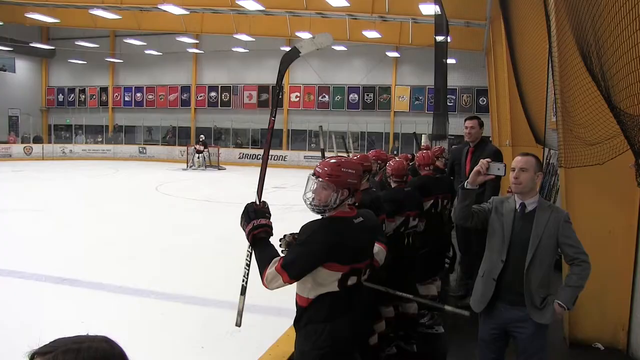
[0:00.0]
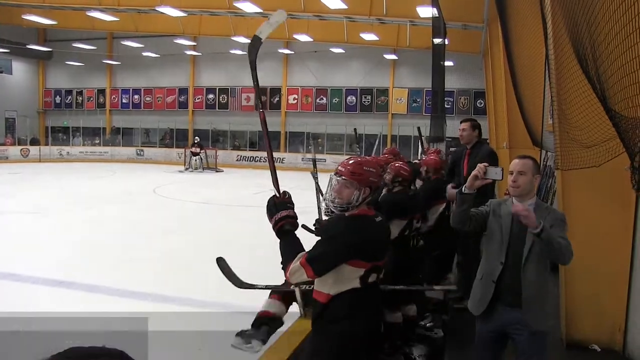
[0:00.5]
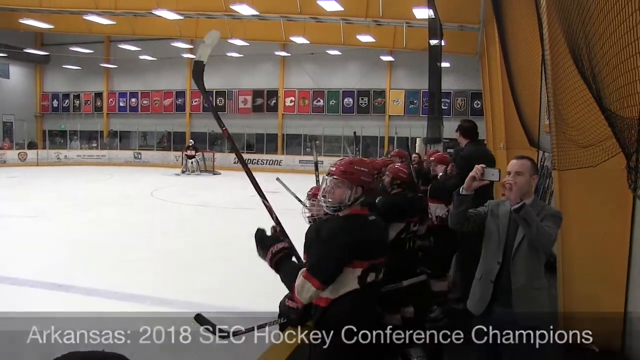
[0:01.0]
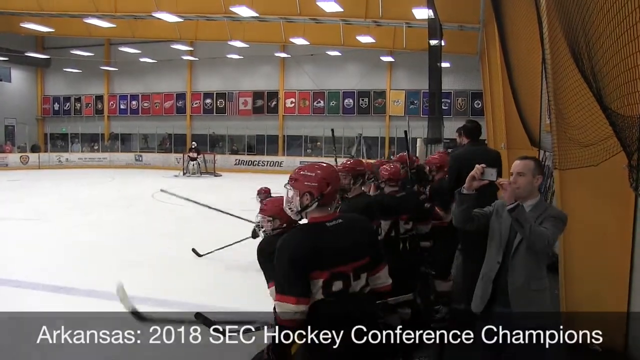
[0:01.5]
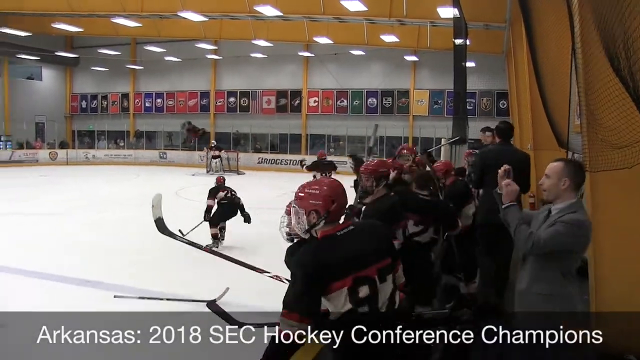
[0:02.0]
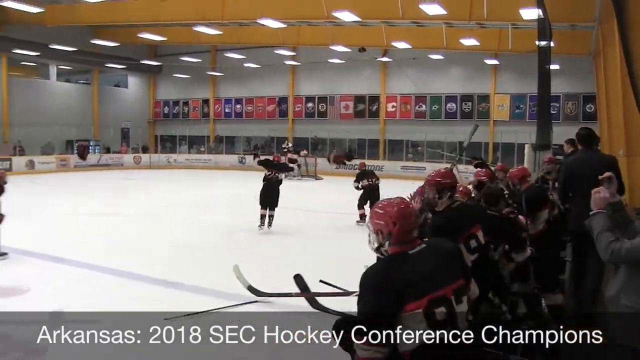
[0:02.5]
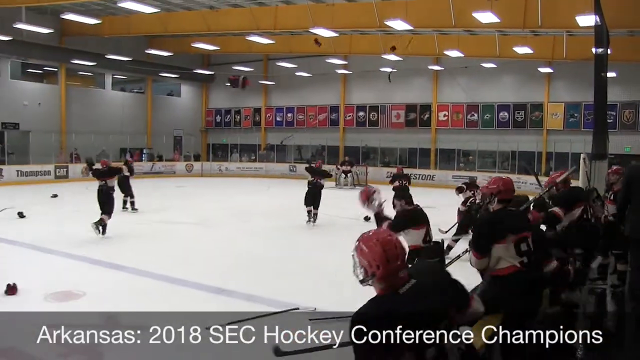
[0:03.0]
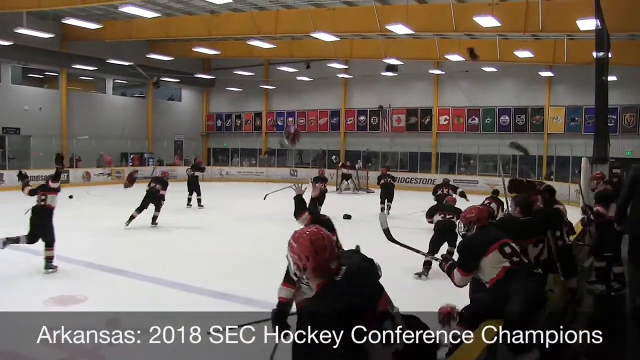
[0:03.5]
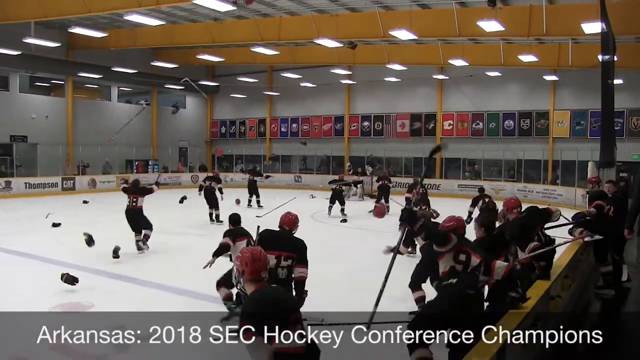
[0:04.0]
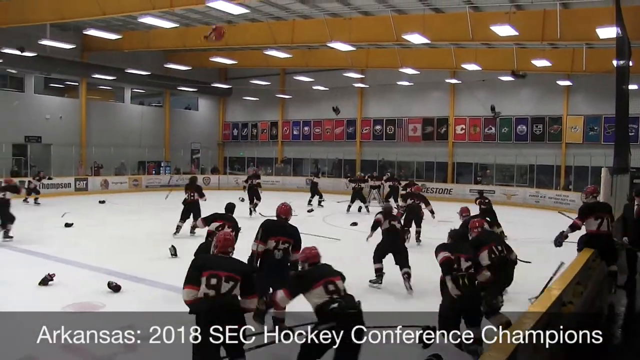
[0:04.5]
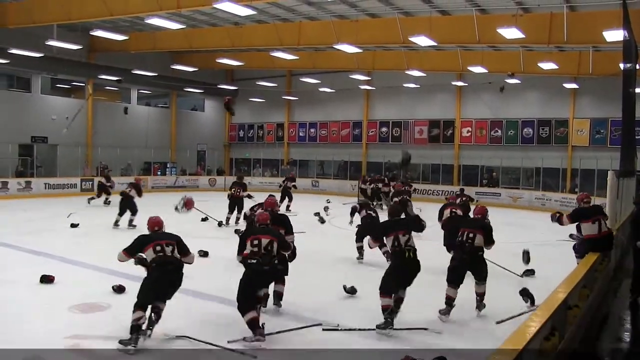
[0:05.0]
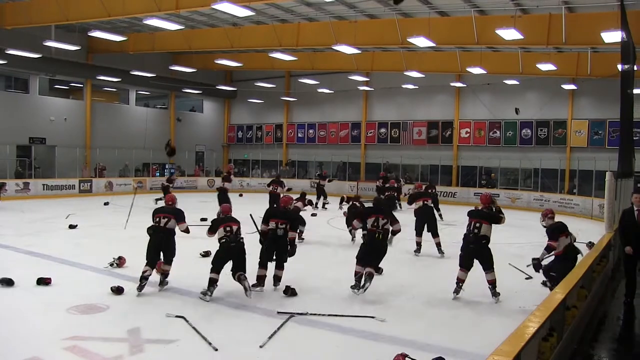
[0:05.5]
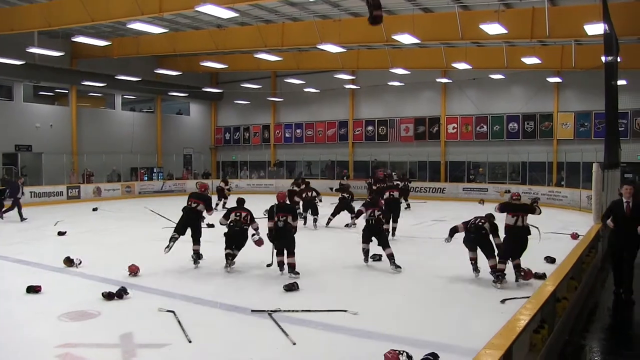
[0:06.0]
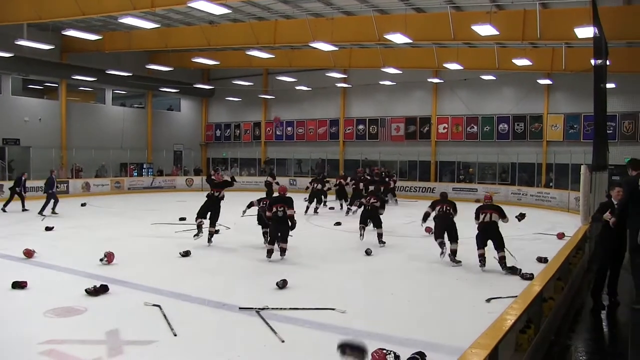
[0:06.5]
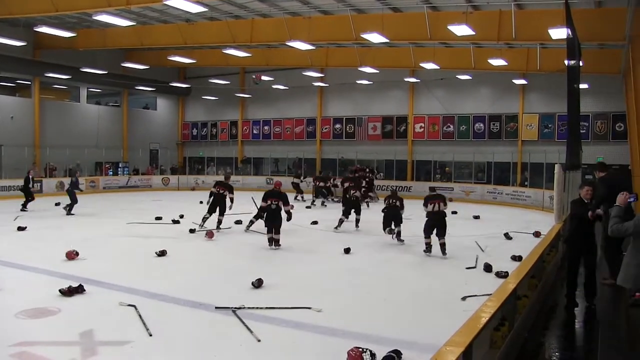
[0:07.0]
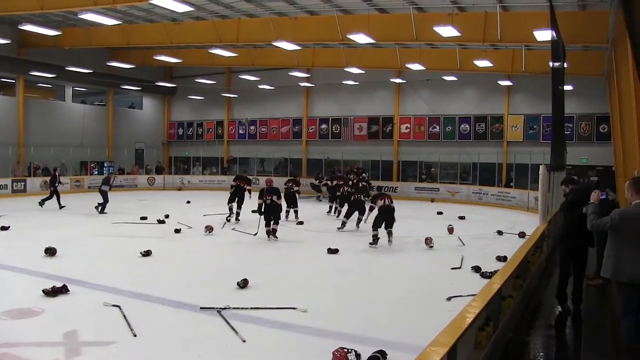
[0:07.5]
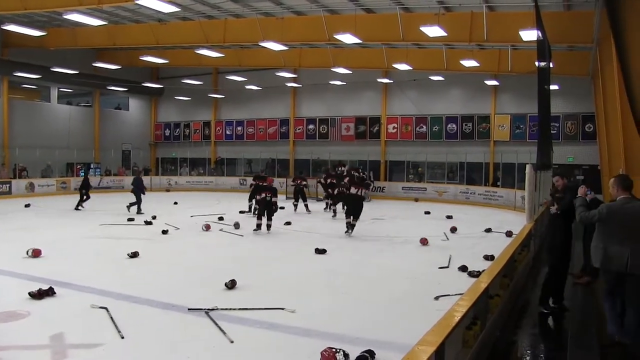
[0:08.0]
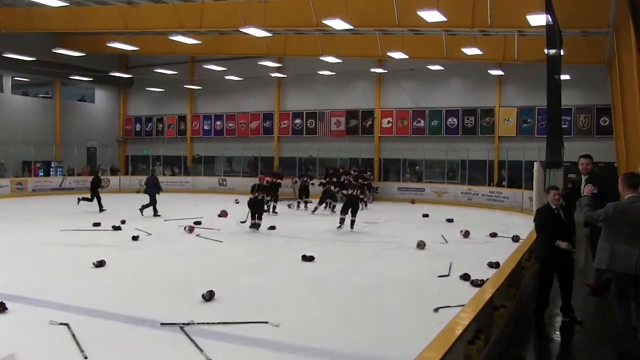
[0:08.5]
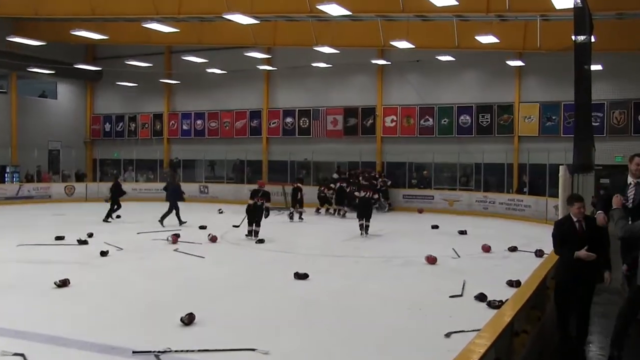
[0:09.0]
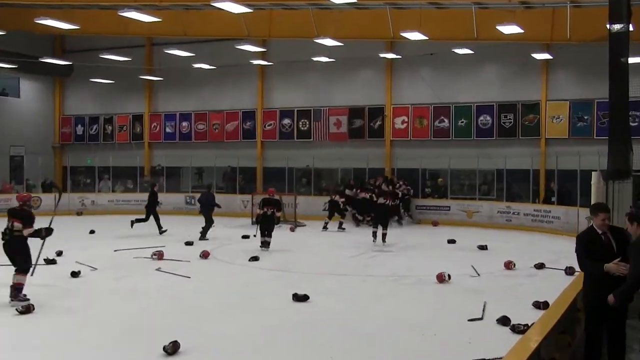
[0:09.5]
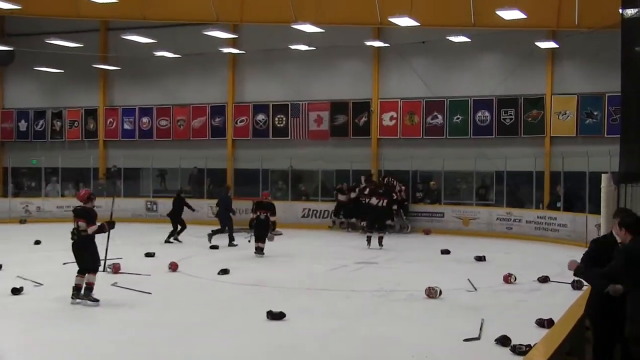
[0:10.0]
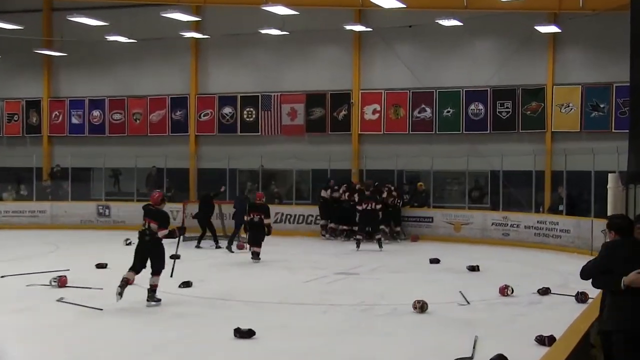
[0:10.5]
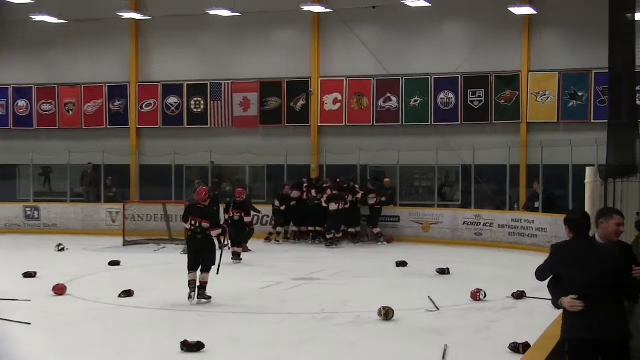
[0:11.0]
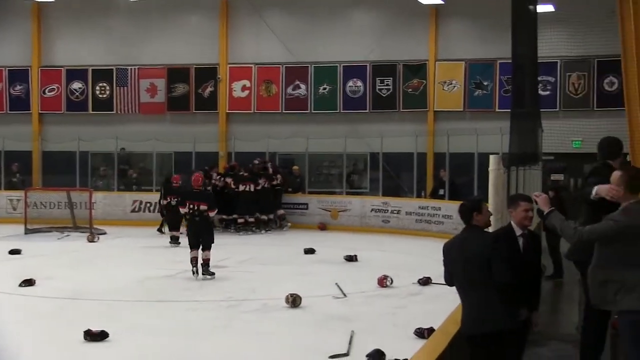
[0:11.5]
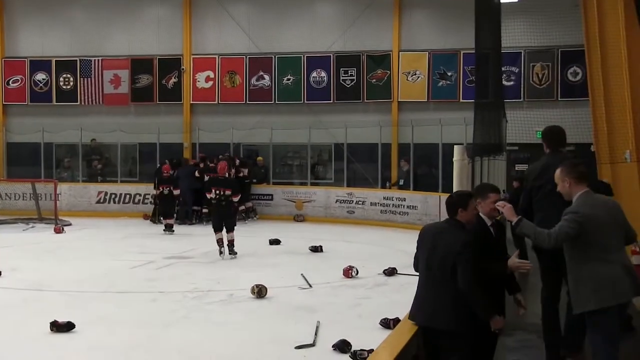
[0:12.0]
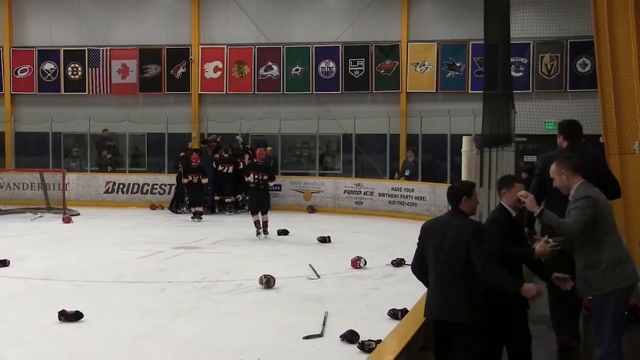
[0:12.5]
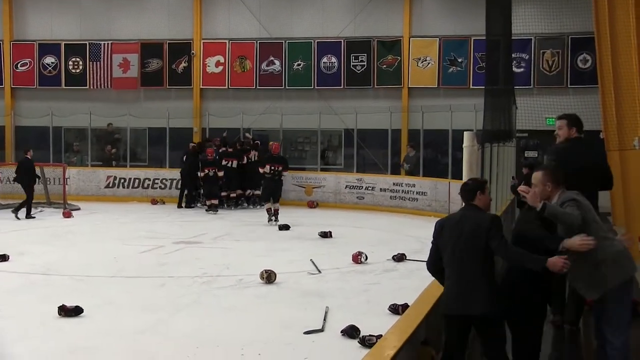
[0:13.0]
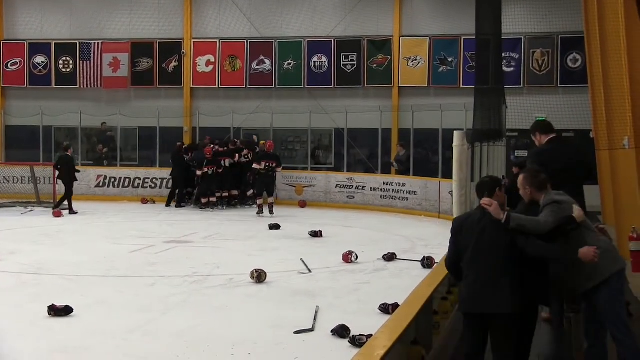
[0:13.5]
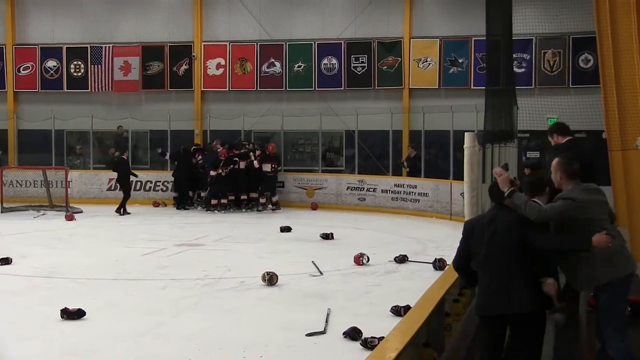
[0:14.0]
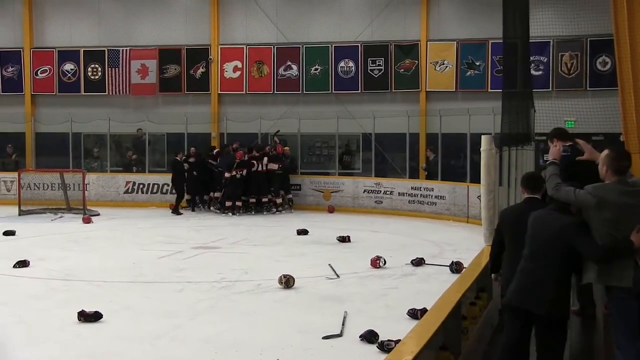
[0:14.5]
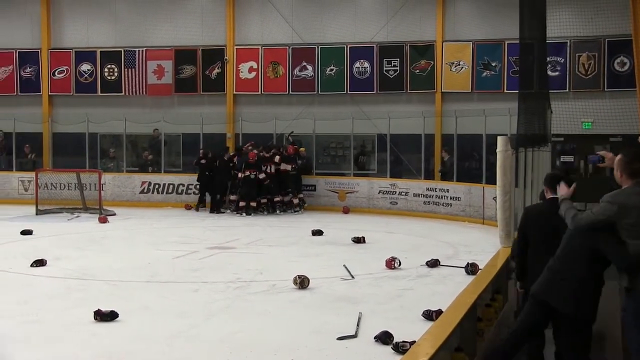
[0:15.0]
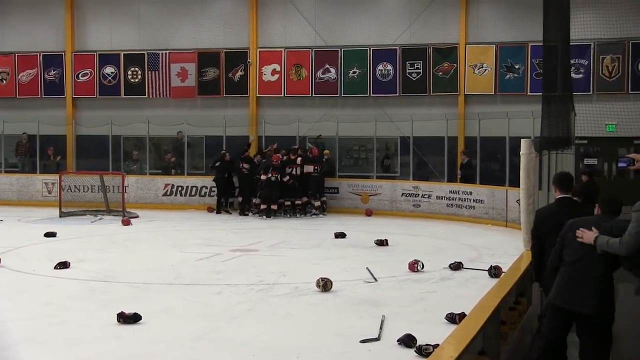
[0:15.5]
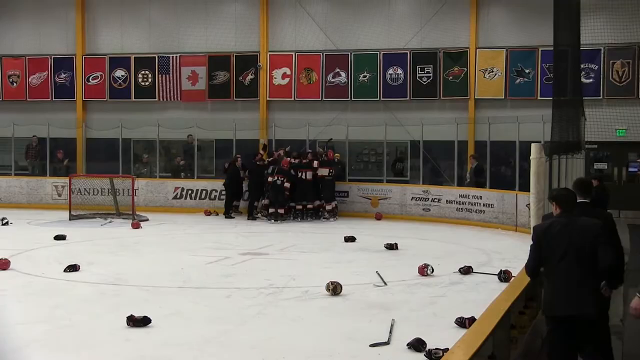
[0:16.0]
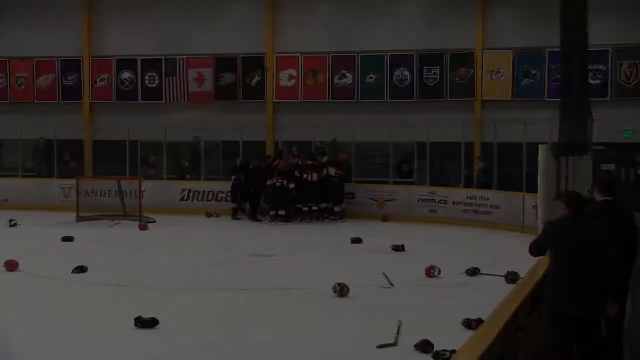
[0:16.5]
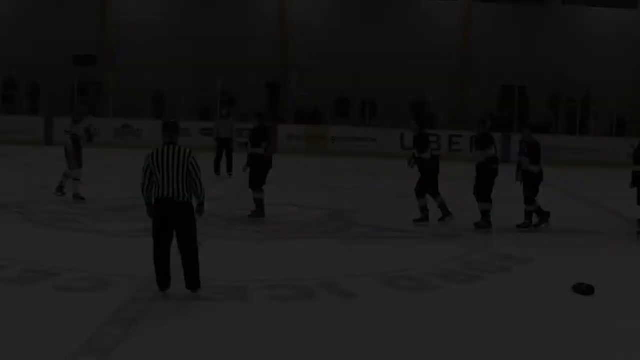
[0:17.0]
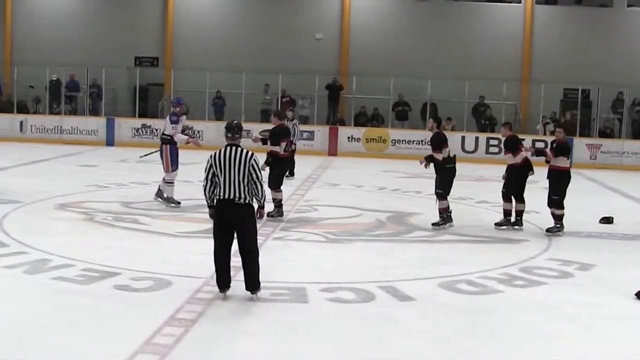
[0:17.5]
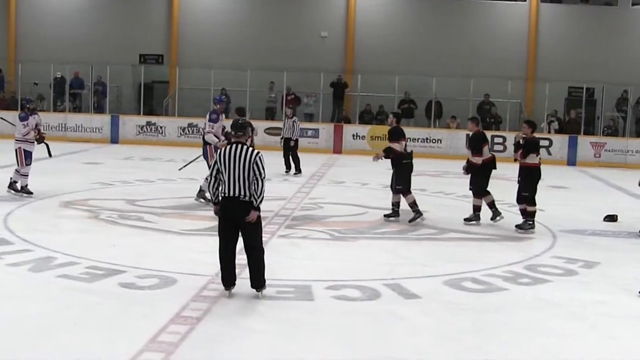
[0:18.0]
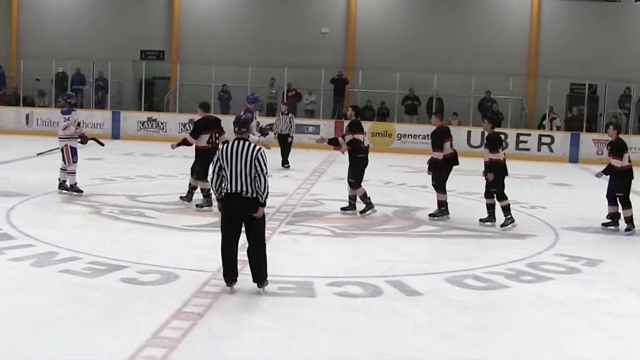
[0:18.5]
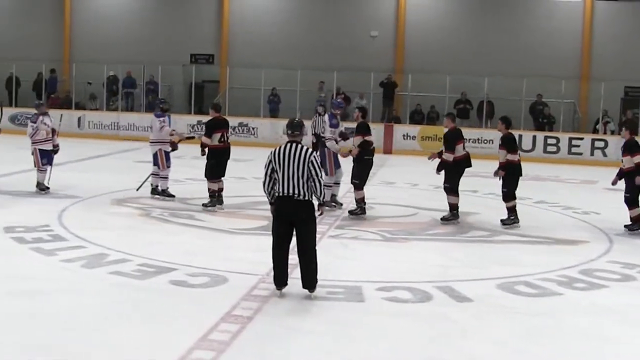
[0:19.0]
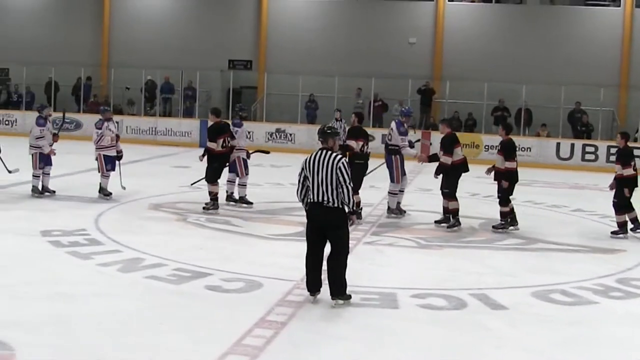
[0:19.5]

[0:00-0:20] A group of hockey players celebrate together in one area, while a number of people on the sideline hug each other and celebrate. Hockey players shake hands with the opposing team, which wears very dark black jerseys. Flags are in the background. The ice rink is yellow throughout the background, with yellow ceiling and walls, and yellow pillars stand in the background.